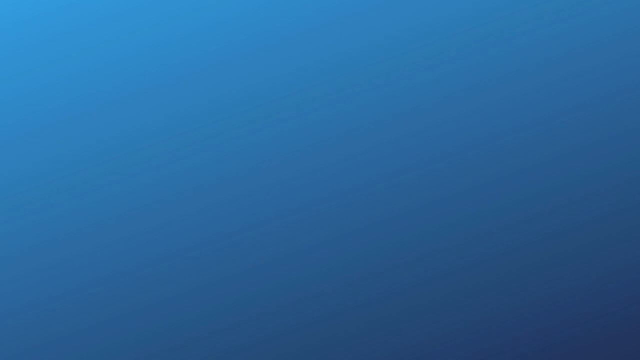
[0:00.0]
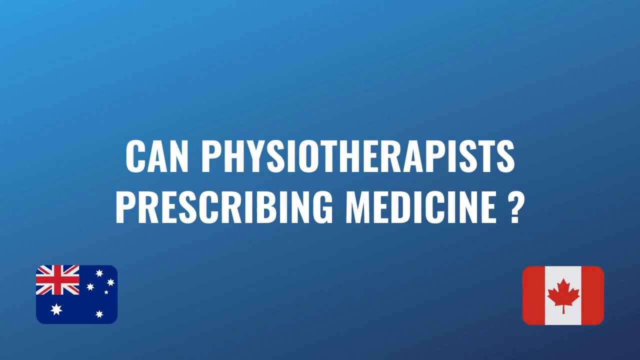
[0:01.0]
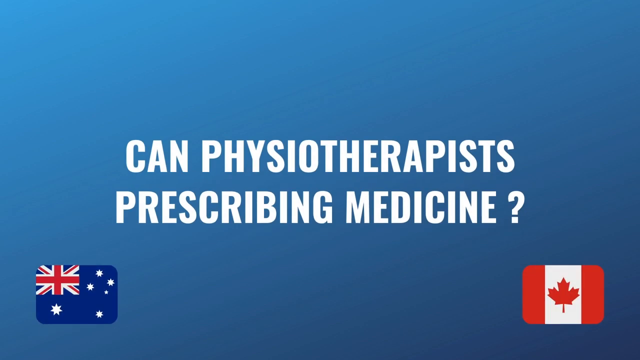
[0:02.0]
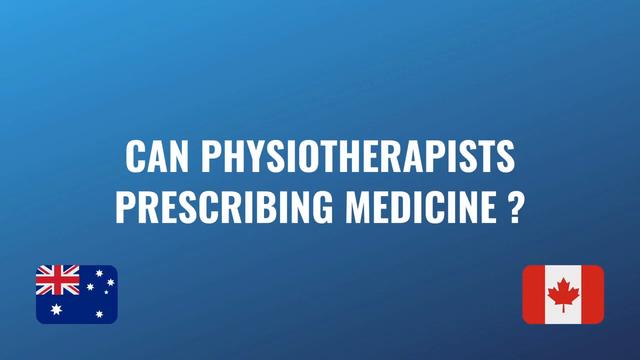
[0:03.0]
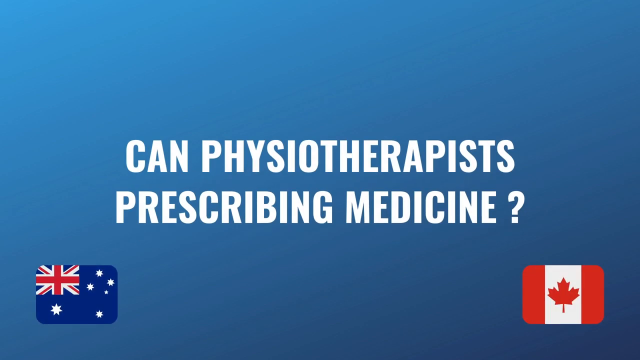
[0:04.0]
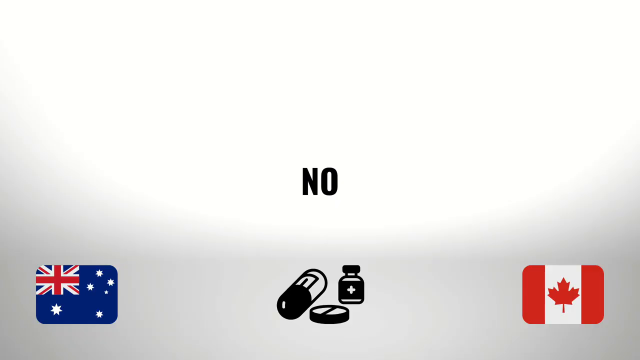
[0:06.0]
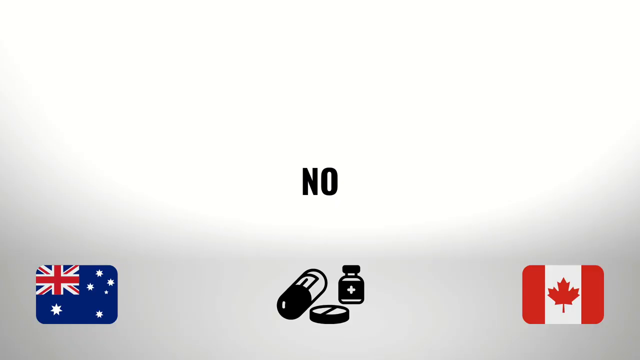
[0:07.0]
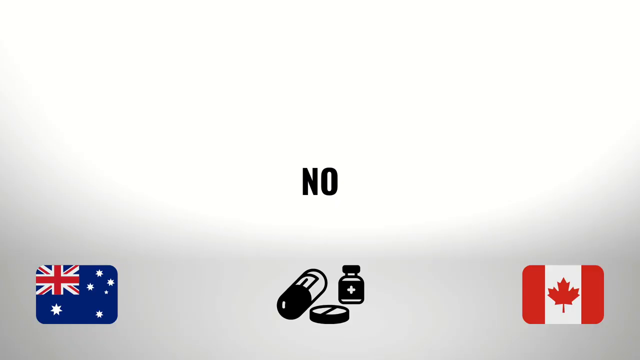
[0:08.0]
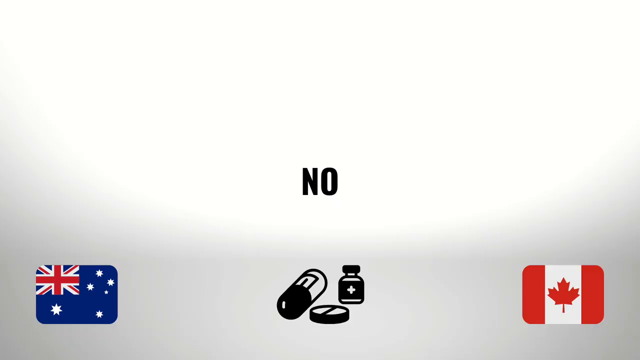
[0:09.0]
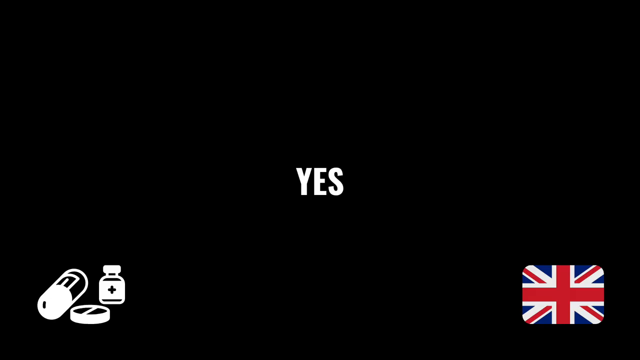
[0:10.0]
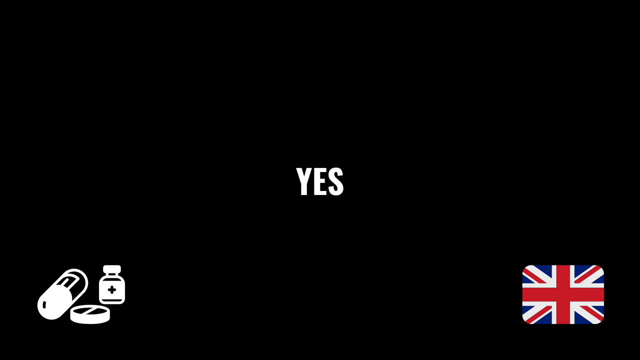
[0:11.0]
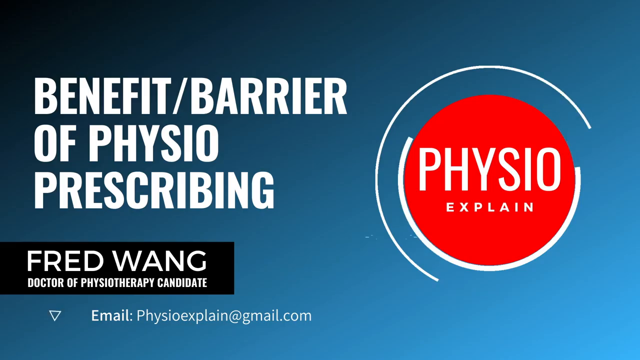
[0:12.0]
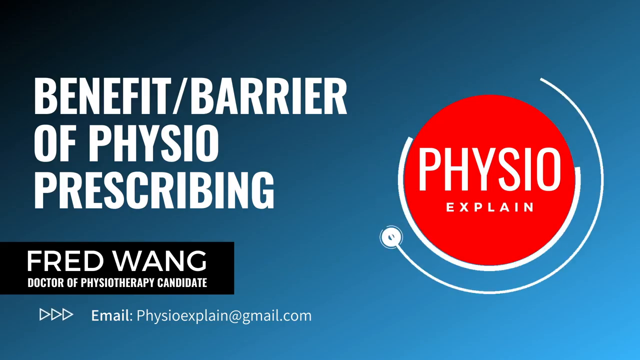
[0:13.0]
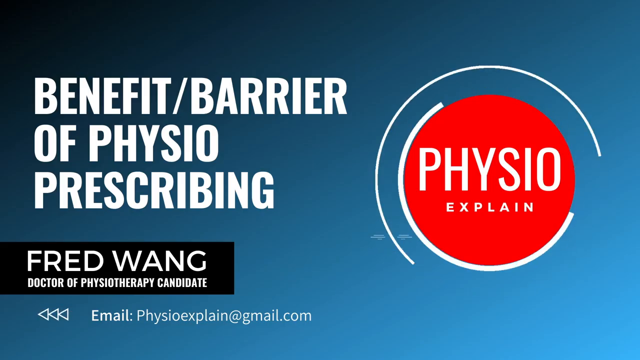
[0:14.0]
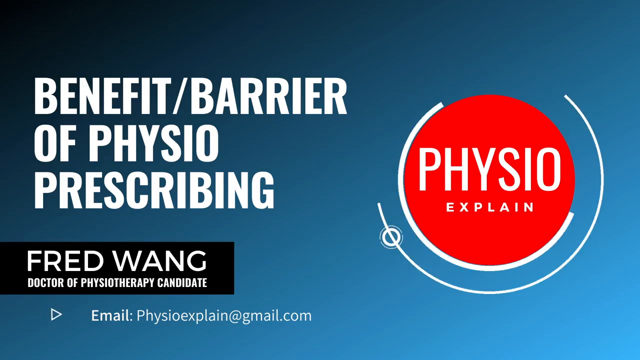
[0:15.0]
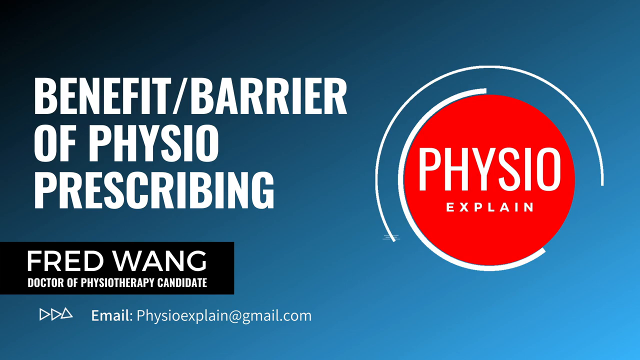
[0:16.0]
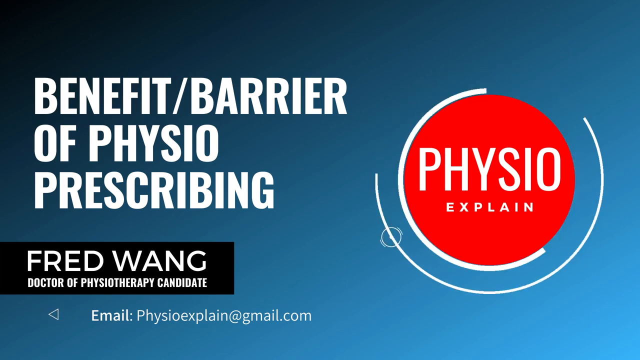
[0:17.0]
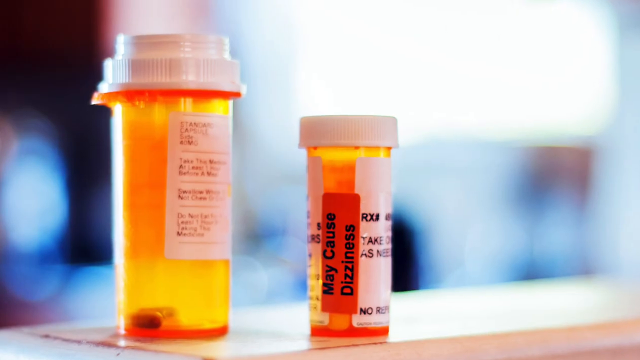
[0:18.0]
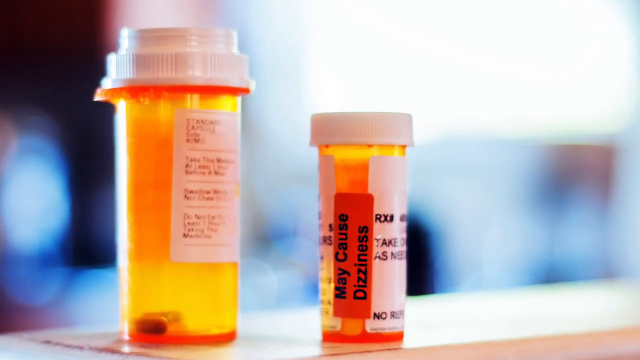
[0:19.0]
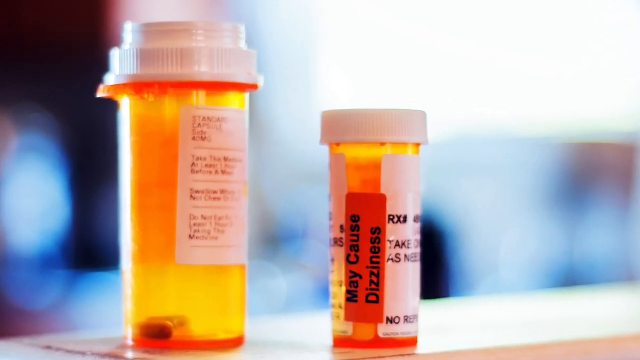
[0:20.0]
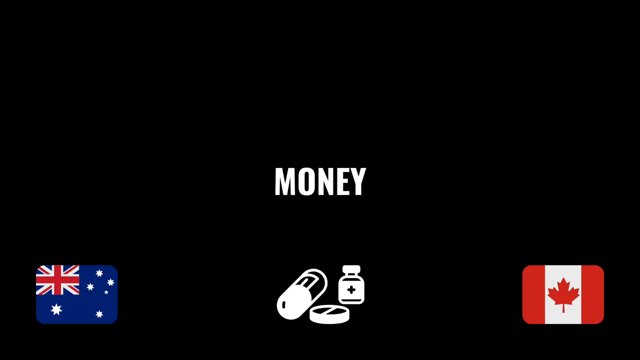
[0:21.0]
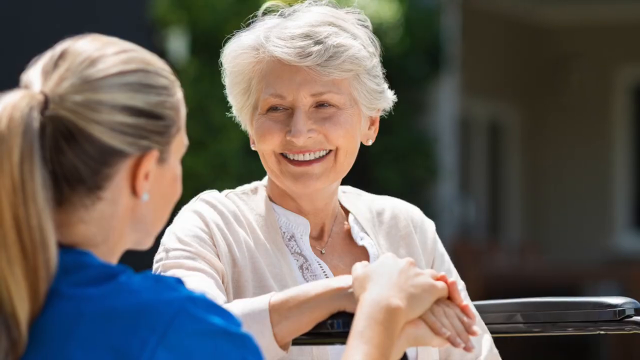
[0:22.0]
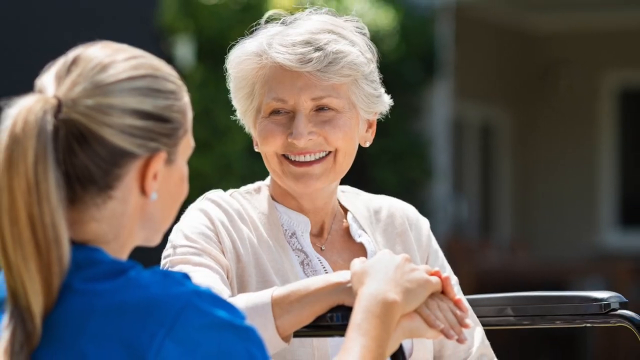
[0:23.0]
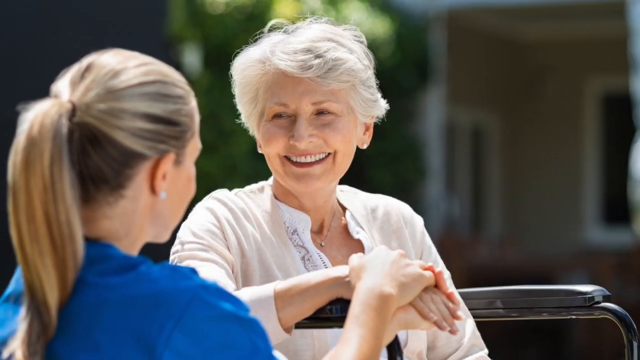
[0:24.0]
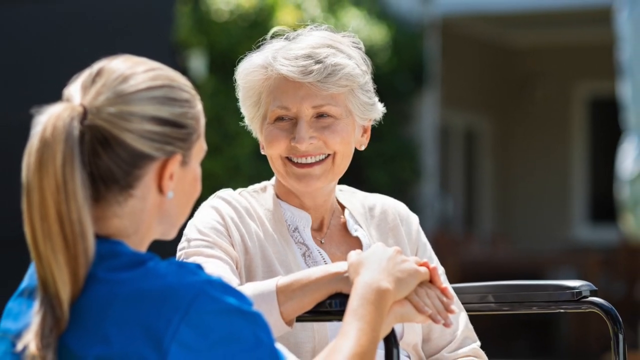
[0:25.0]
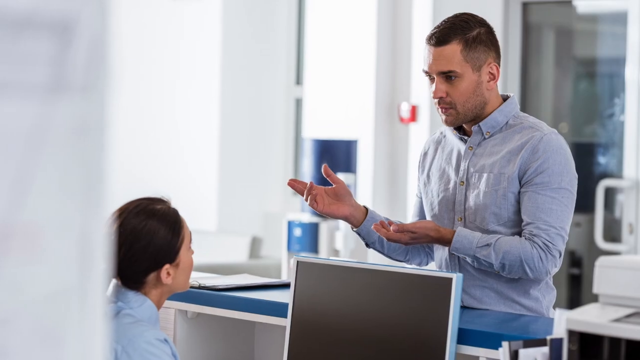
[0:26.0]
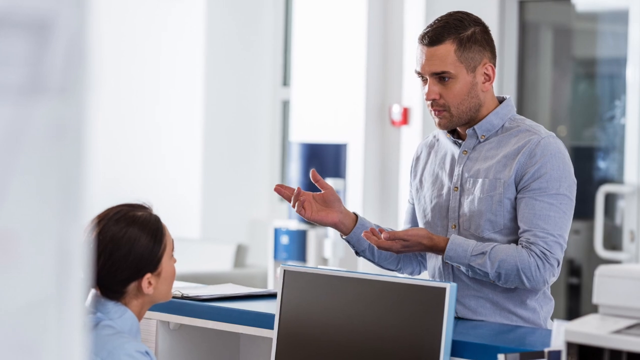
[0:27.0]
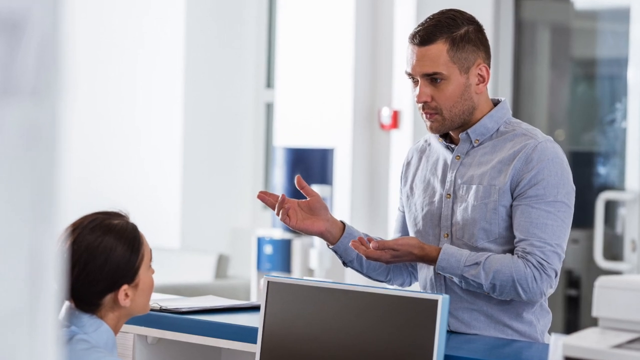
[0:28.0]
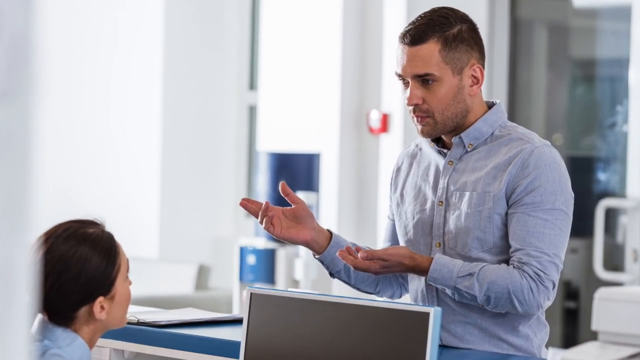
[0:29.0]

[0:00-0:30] A title reads "Can physiotherapist prescribing medicine?" In the bottom left is a flag that resembles the American flag but apparently is not; it is possibly the British flag. In the bottom right is the Canadian flag. The answer to the question appears as a black "no" and also a white "yes." Text reads "benefit / barrier of physio prescribing" and "Fred Wong, doctor of physiotherapy candidate," with an email address at the bottom, "physioexplain@gmail.com," and a red circle that says "physio explain." The video then cuts away to two yellow pill bottles with white caps: a very large one on the left and a smaller one on the right. An orange sticker on the smaller bottle reads "may cause dizziness." Text then says "time money." An old lady is shown with a younger lady, followed by a young gentleman talking to what looks like a receptionist.